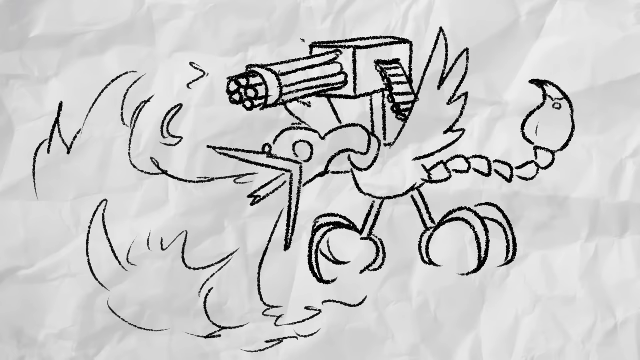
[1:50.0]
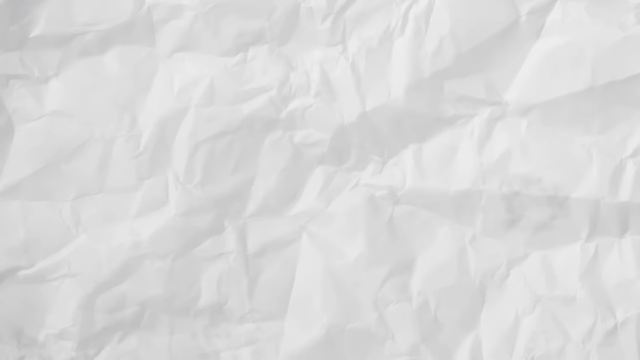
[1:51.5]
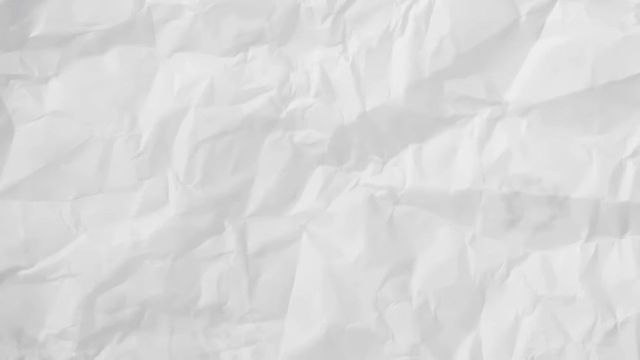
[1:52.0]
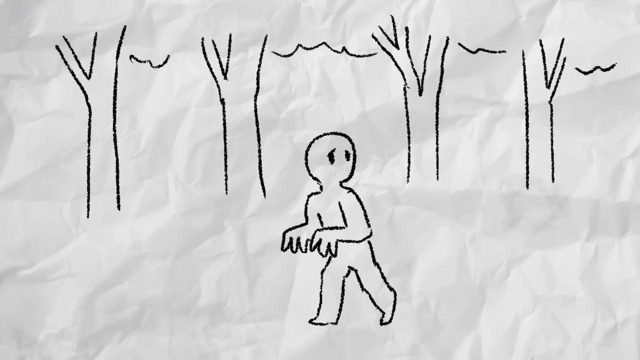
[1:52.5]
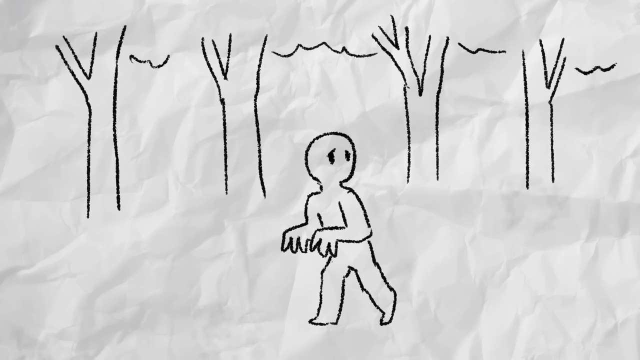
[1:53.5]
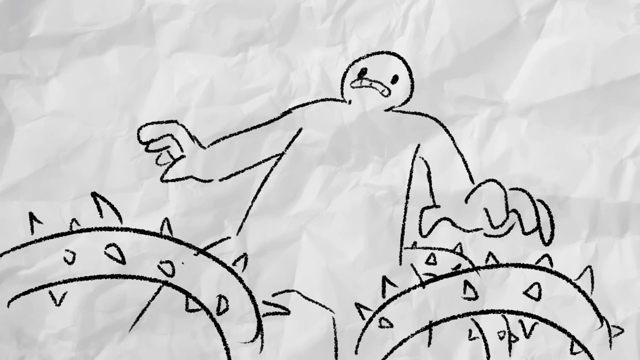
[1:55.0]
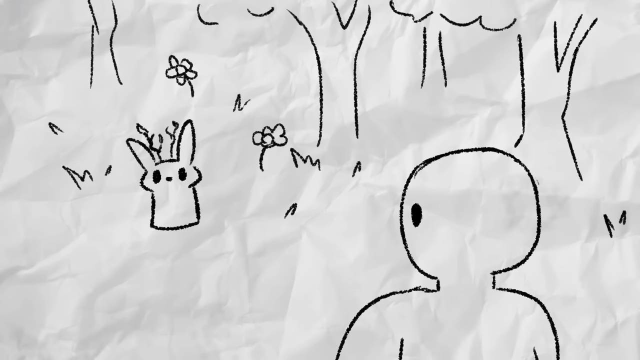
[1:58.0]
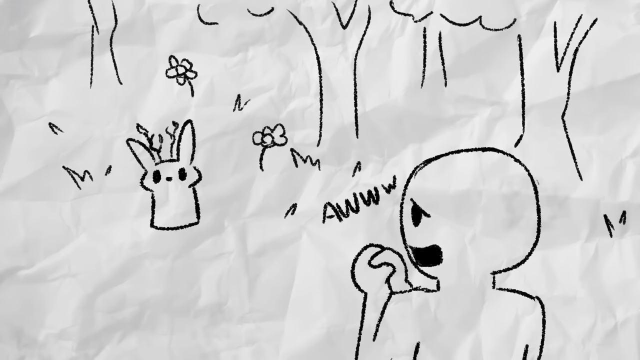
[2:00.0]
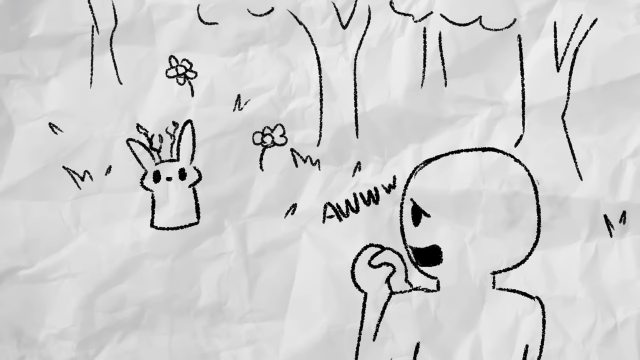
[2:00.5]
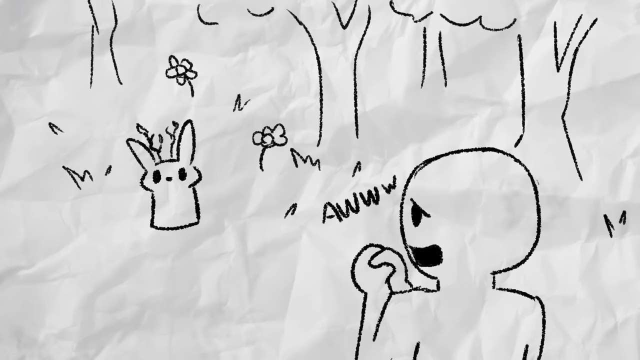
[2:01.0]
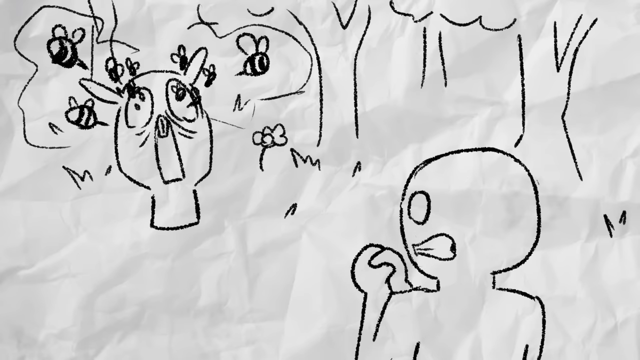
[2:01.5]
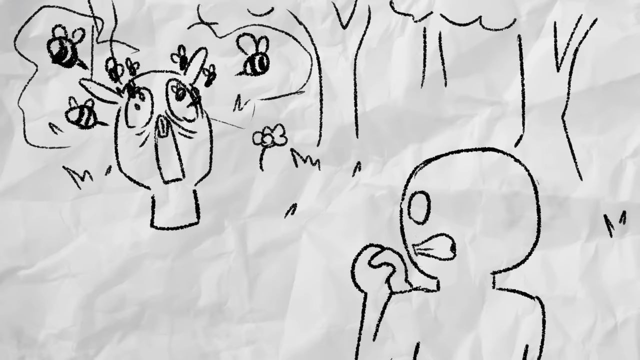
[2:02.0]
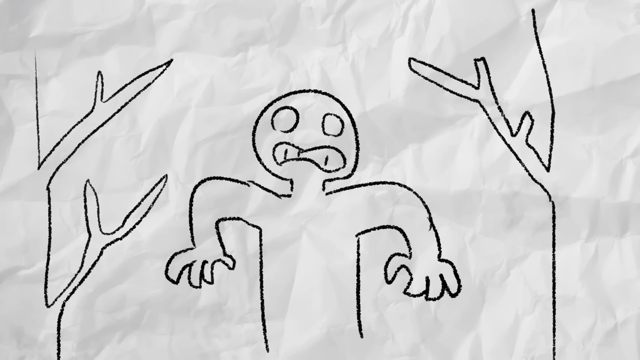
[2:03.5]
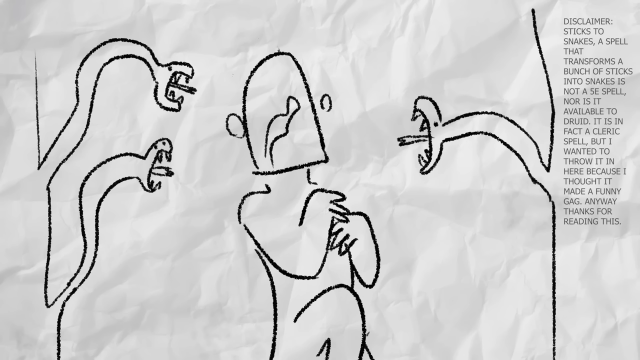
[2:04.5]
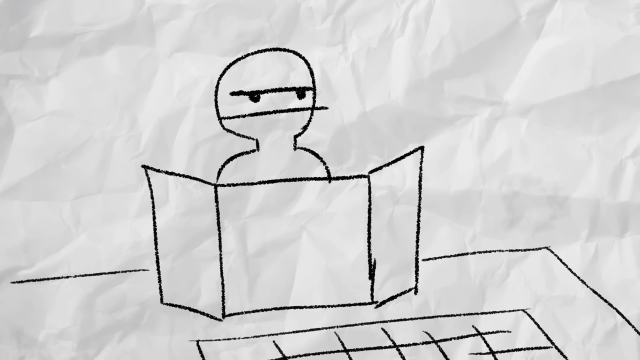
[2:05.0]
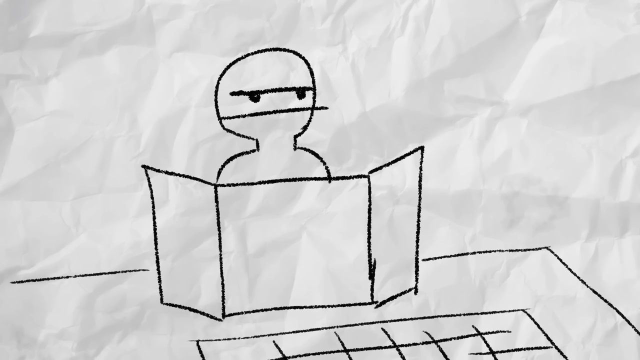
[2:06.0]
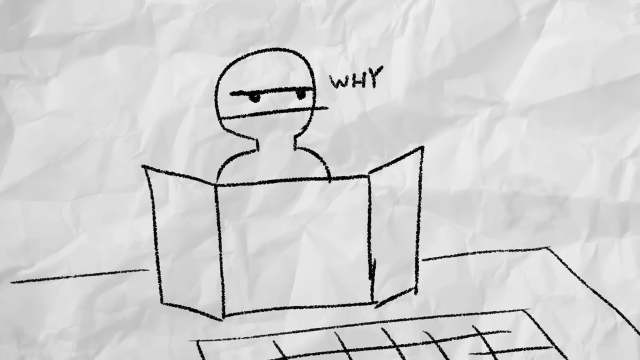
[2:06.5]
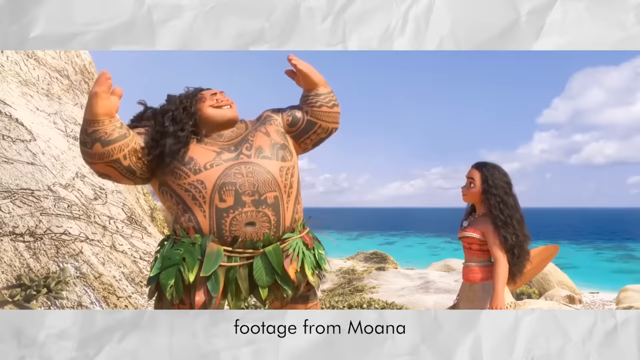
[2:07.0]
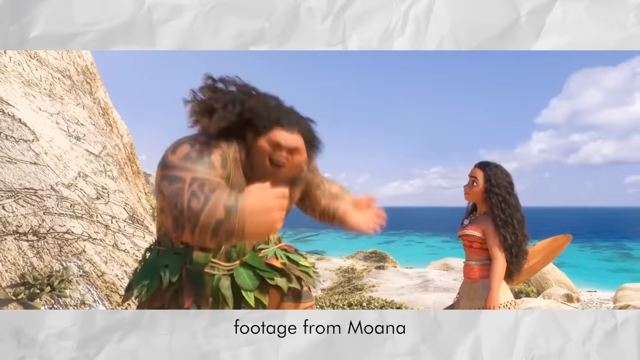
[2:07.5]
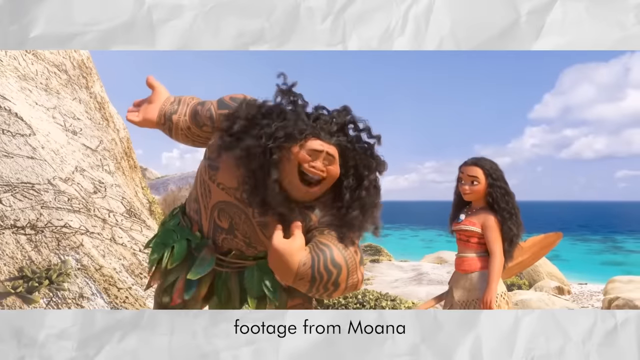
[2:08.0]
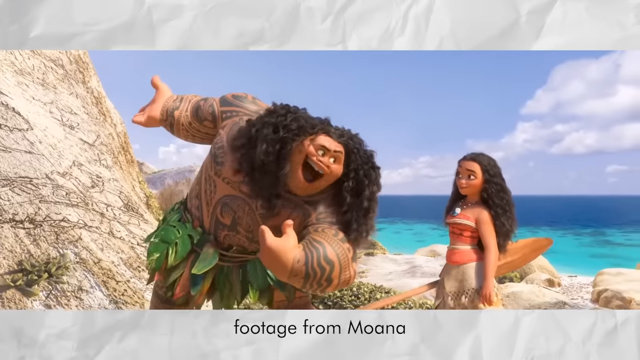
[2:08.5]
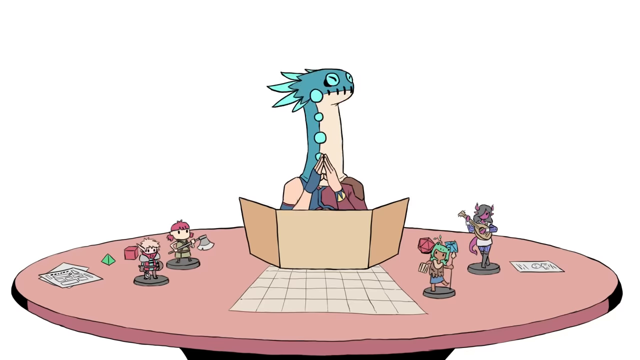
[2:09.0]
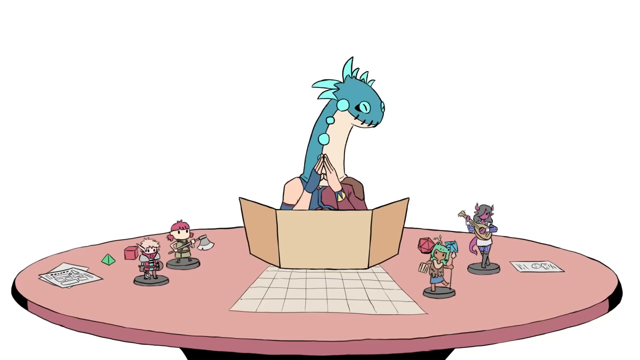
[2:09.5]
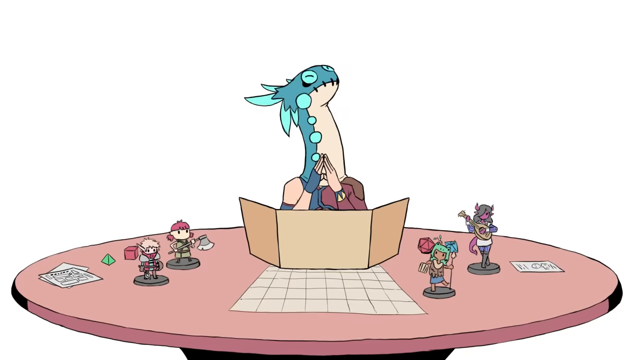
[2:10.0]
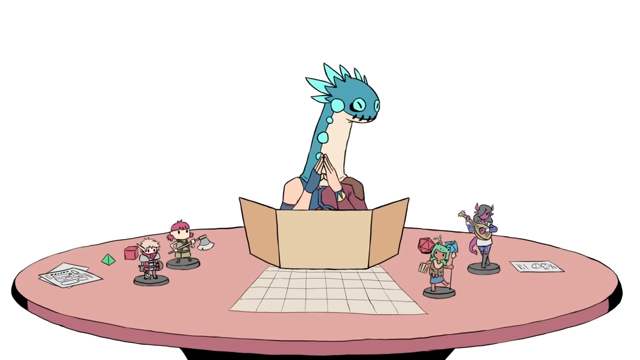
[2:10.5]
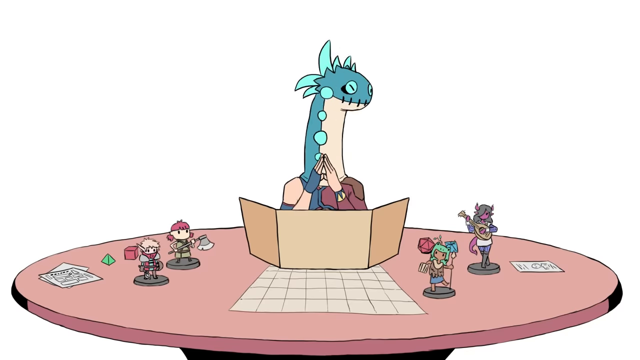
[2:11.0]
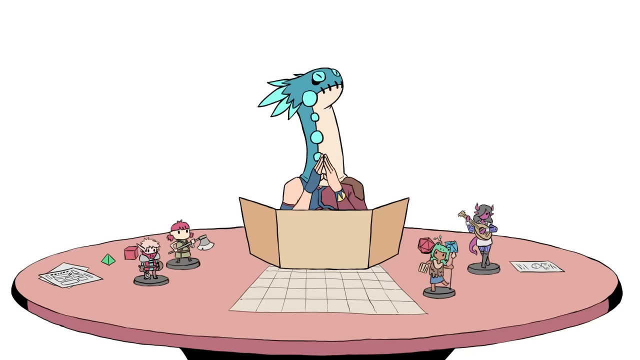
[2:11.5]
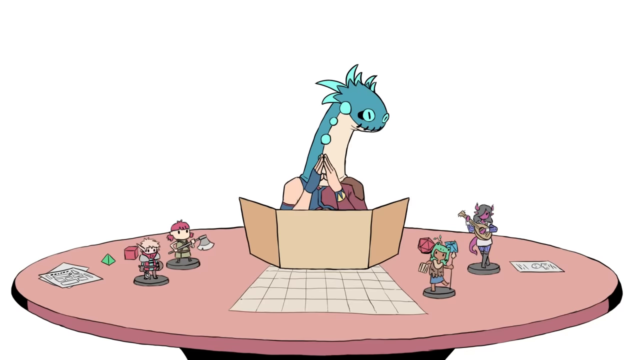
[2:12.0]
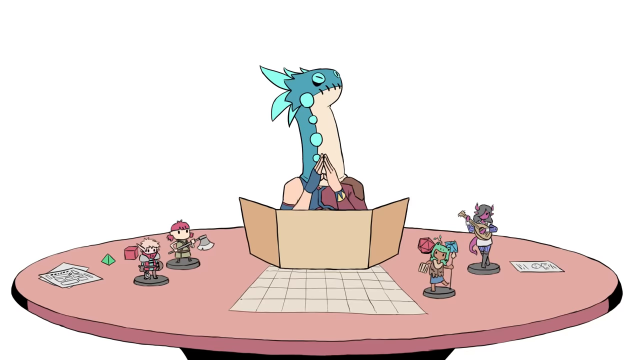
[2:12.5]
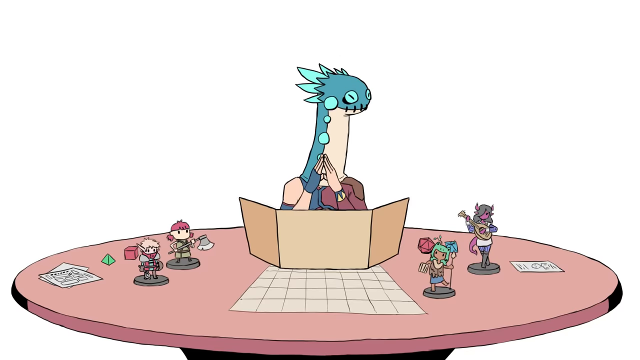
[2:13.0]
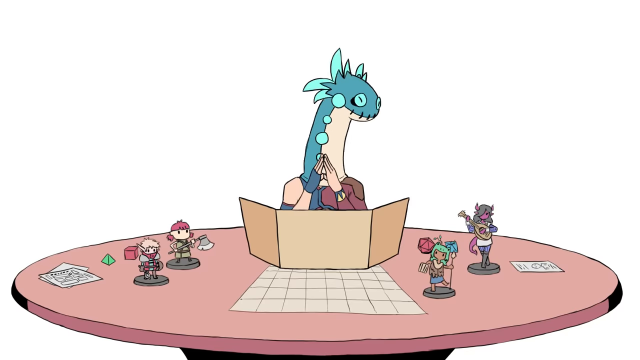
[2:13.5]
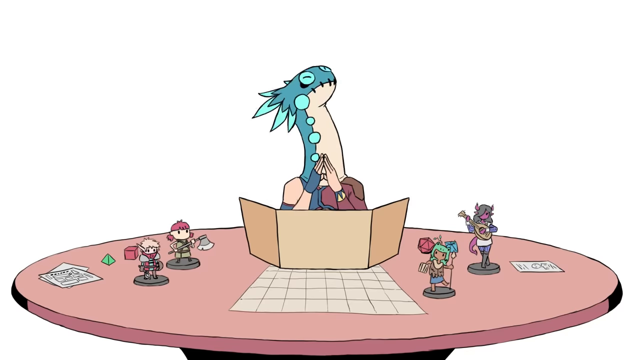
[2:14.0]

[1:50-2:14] Mostly pencil drawings of odd characters appear. A male character walks through the woods and looks at a rabbit, and then the rabbit is attacked by bees as he grimaces. A drawing shows what looks like a man sitting behind paper standing on end on a desk, and the word "Why" appears next to him. Then comes a scene from the movie Moana, with text below it saying "Footage from Moana." The video ends with a colored animated sequence of a character wearing what looks like a dragon mask stitched together like a sock puppet. He has human hands folded in front of him and is seated at a round table with what looks like a folded piece of paper standing on end in front of him. There are small figurines on the table, and he nods his head up and down.